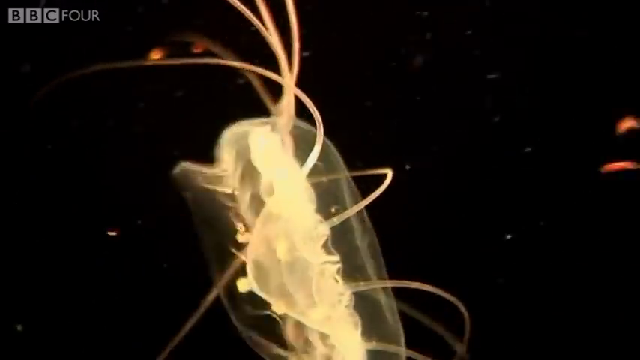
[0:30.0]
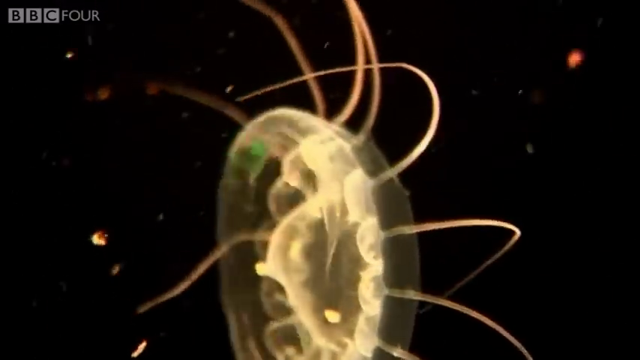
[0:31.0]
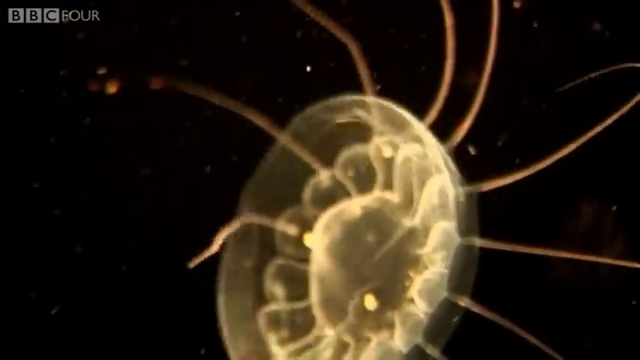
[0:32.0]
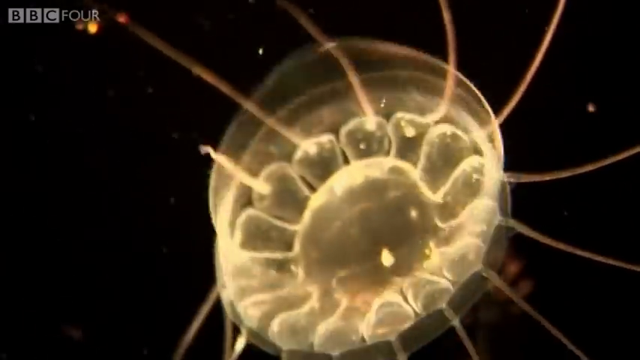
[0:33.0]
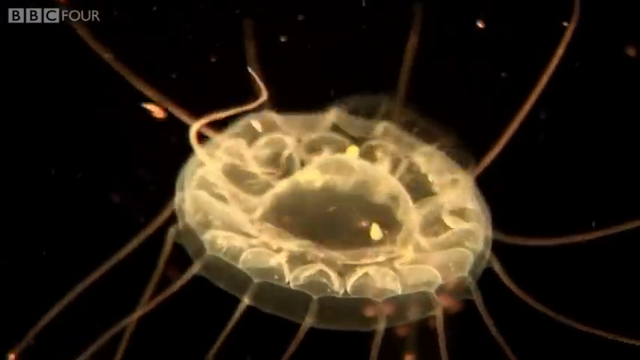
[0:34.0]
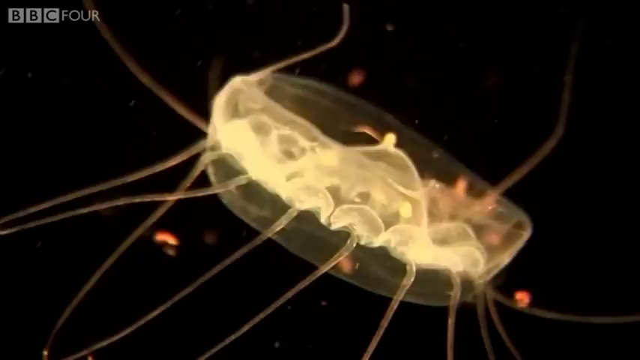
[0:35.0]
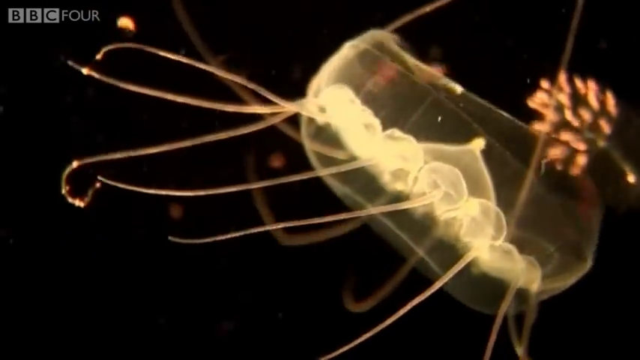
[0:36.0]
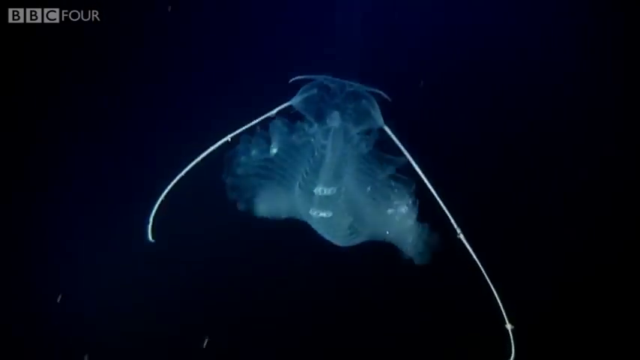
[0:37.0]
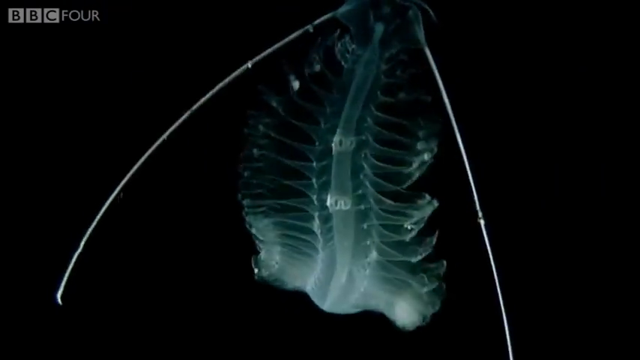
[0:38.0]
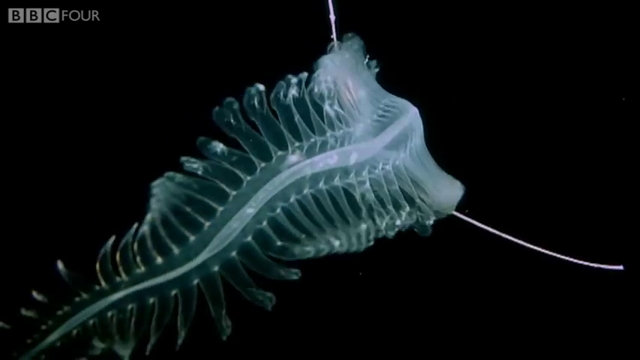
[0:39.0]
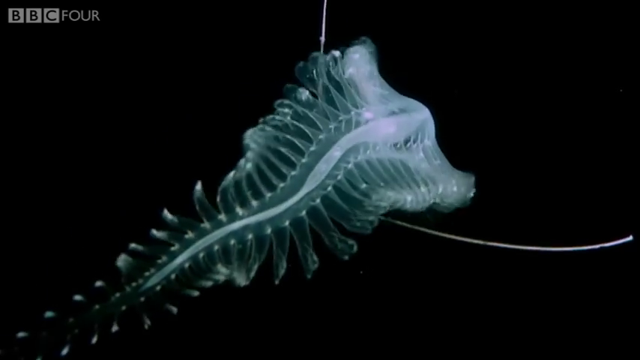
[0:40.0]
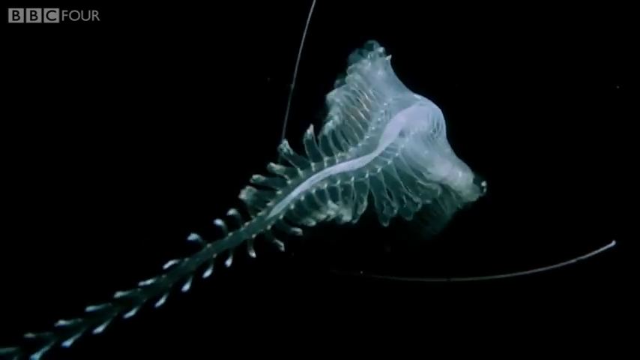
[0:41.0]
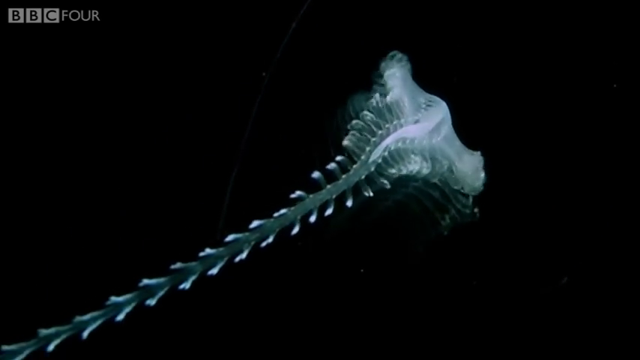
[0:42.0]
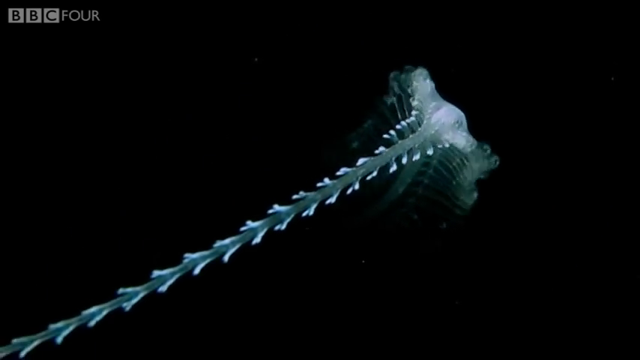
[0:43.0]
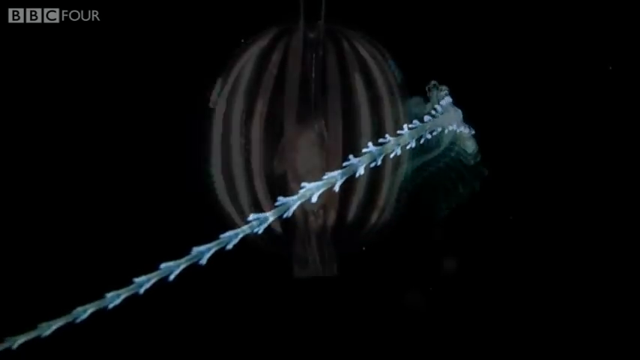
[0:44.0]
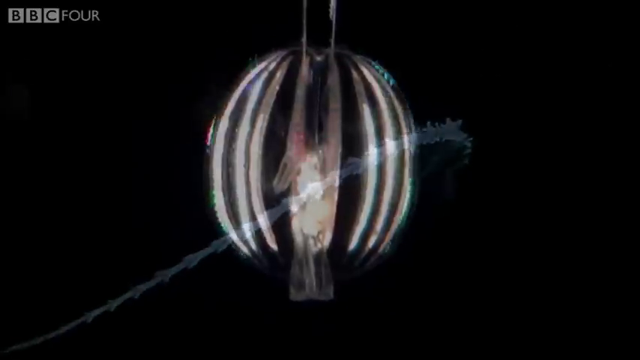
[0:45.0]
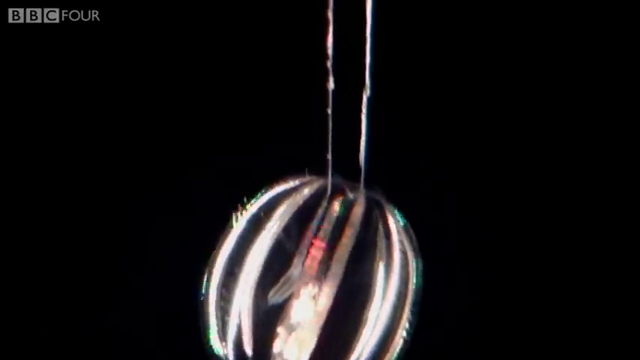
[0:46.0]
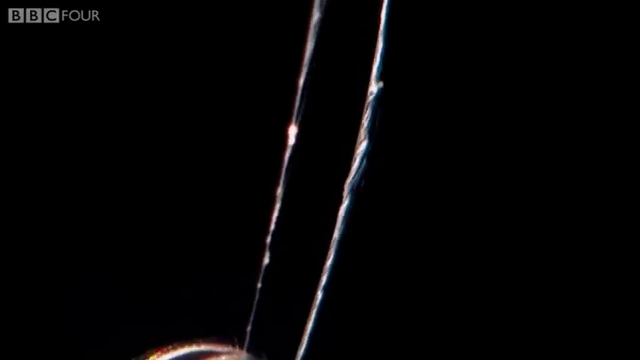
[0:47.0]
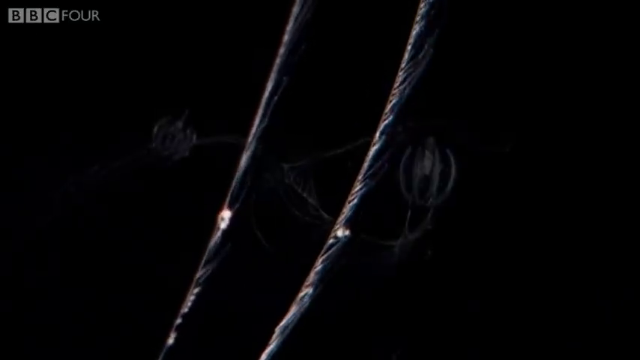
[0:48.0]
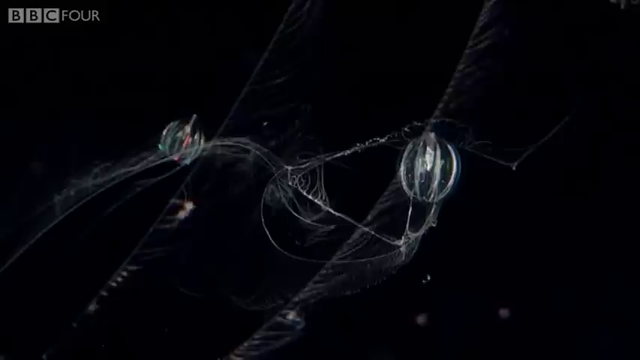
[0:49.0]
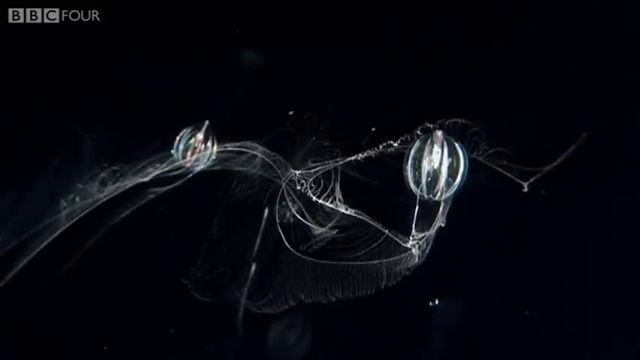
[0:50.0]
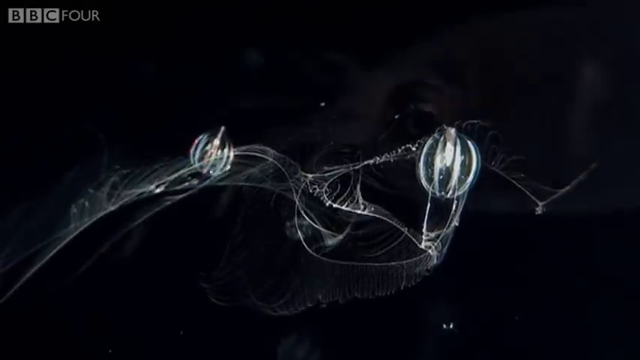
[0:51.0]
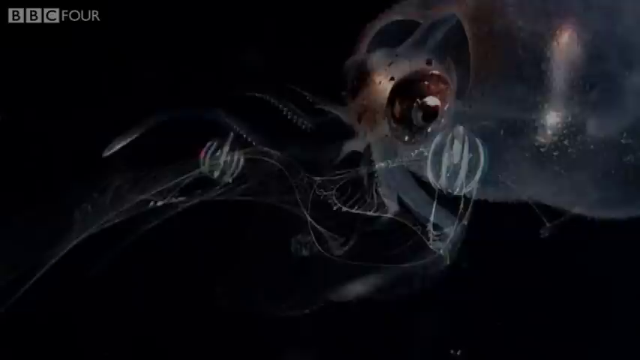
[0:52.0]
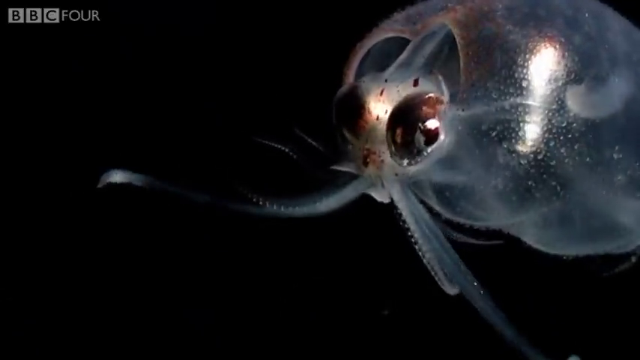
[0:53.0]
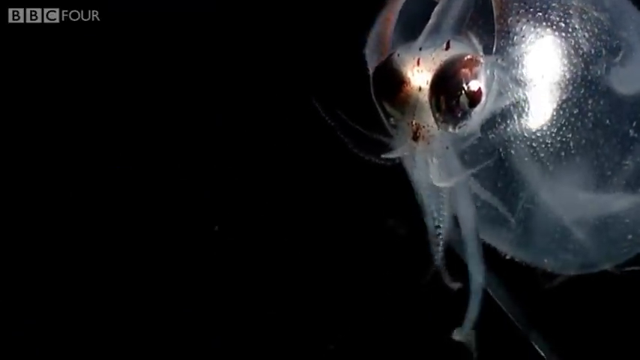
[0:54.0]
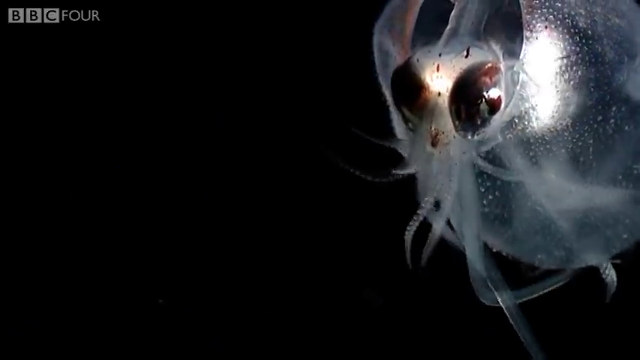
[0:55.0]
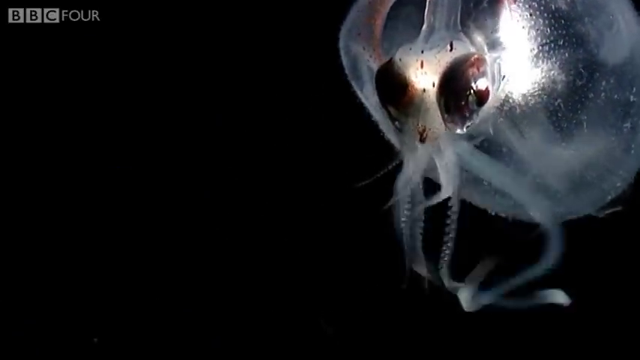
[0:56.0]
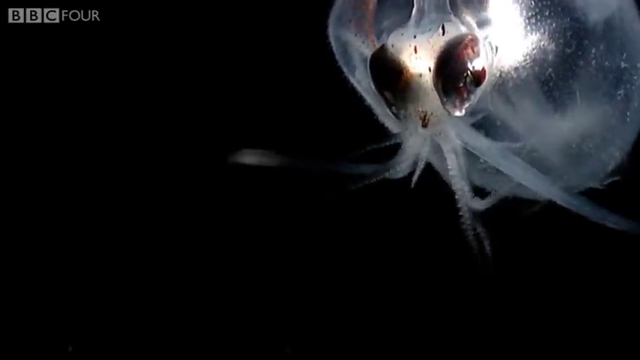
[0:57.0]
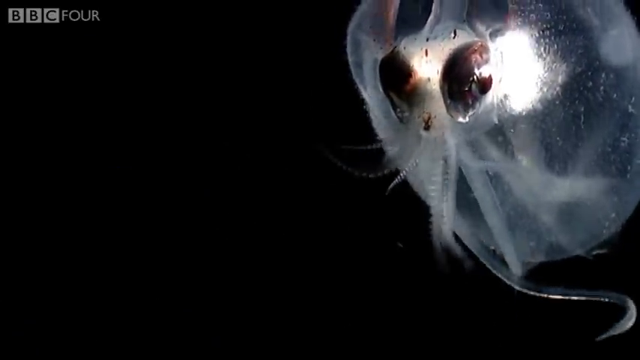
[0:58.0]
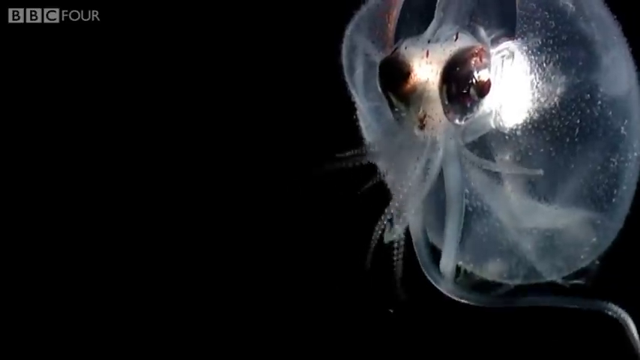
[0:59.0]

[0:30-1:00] A jellyfish has tentacles out on either side of it, and its underside pulsates in and out, propelling it through the water. The video goes on to show different jellyfish and see-through creatures in the ocean. Some look like they could be crustaceans, but their bodies are see-through, so they are possibly some sort of jellyfish or something in the octopus family. Tentacles point out from the sides of the creatures as they swim; some have very long tentacles and some shorter ones. Their bodies move from side to side in a snake-like fashion as they propel themselves through the water. Finally, a very small creature appears that looks like a mix between a jellyfish and some type of octopus.